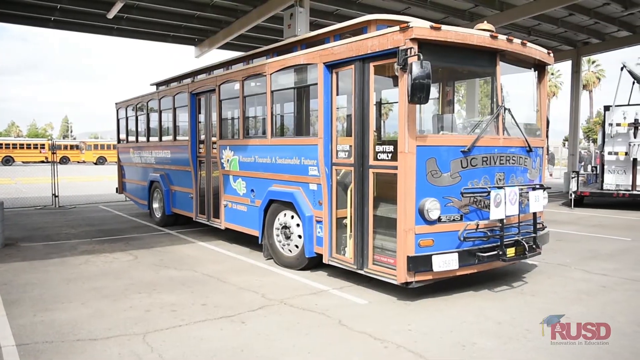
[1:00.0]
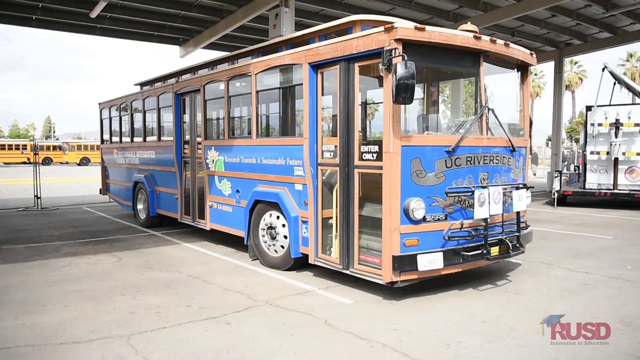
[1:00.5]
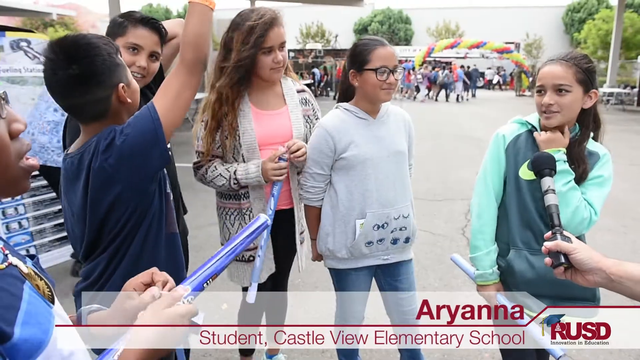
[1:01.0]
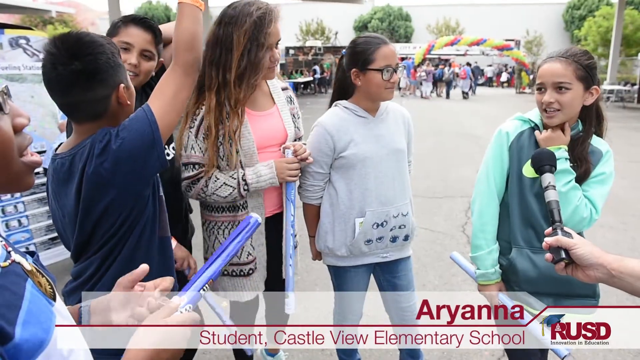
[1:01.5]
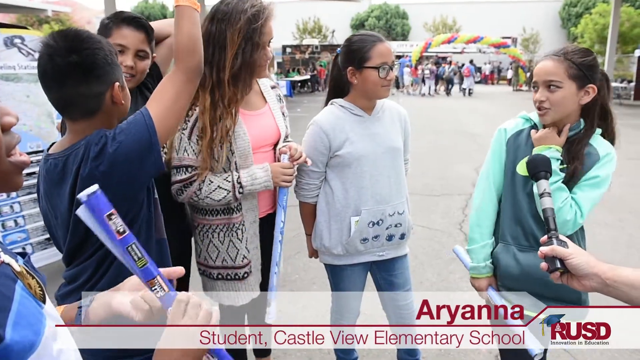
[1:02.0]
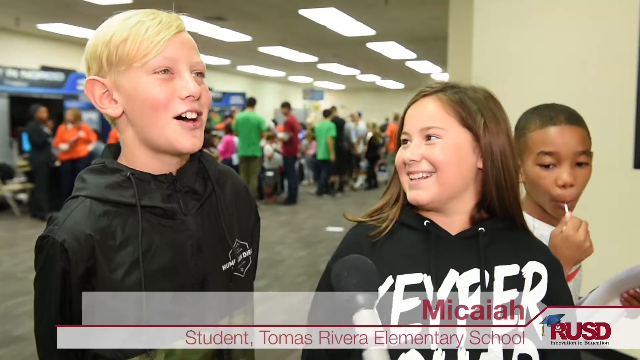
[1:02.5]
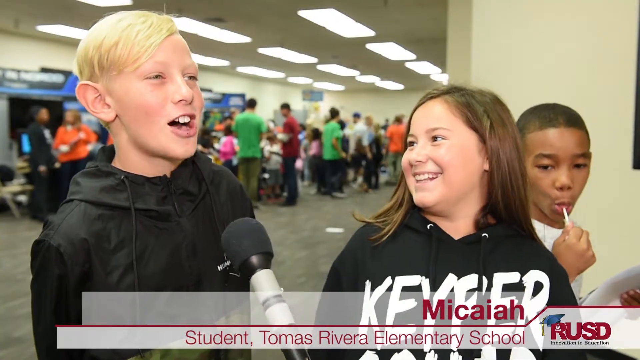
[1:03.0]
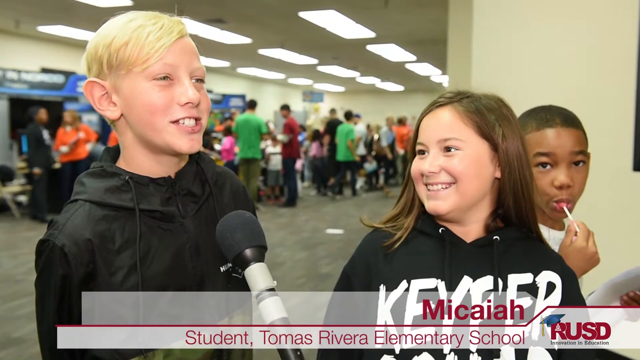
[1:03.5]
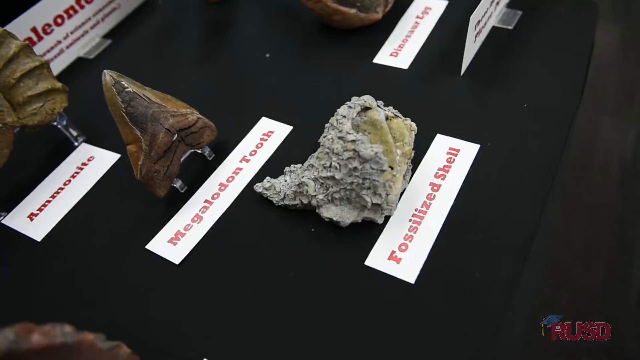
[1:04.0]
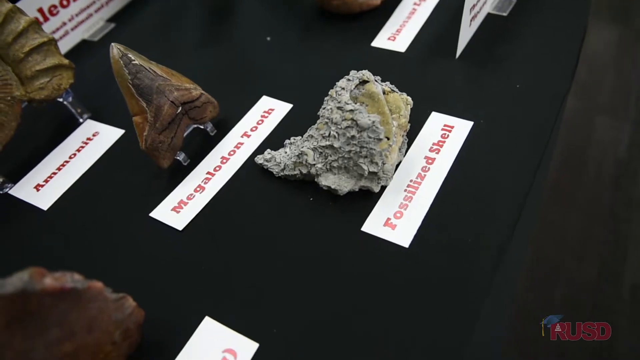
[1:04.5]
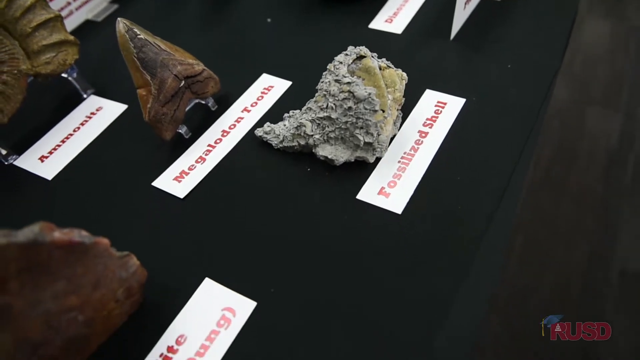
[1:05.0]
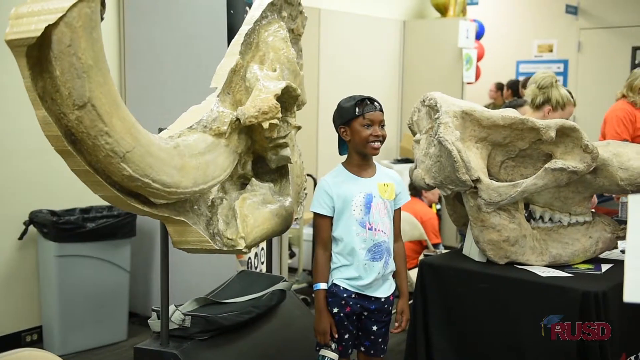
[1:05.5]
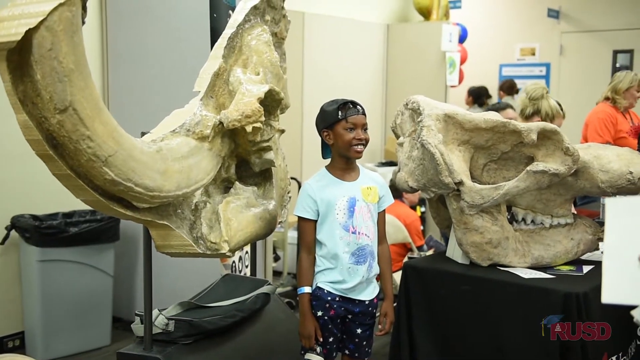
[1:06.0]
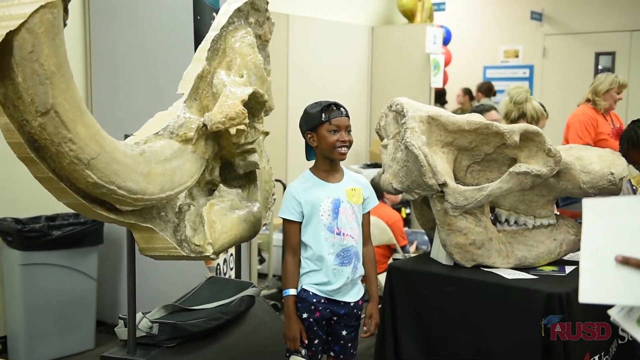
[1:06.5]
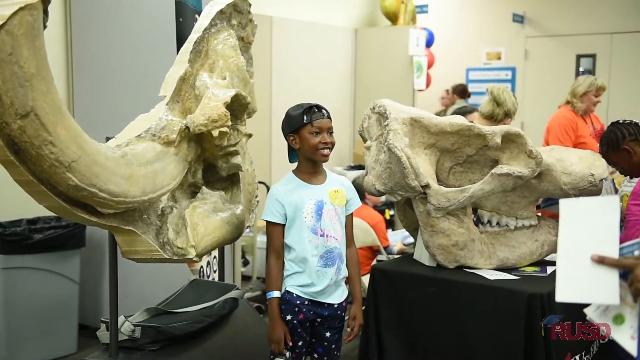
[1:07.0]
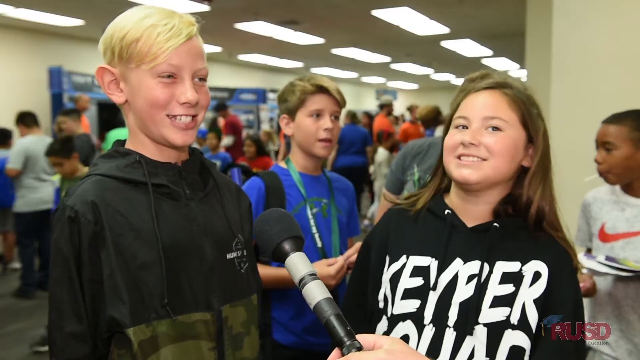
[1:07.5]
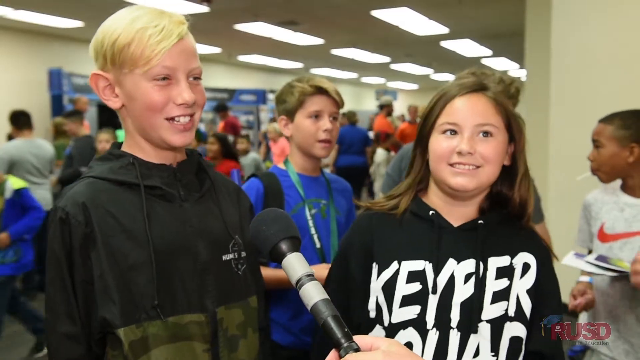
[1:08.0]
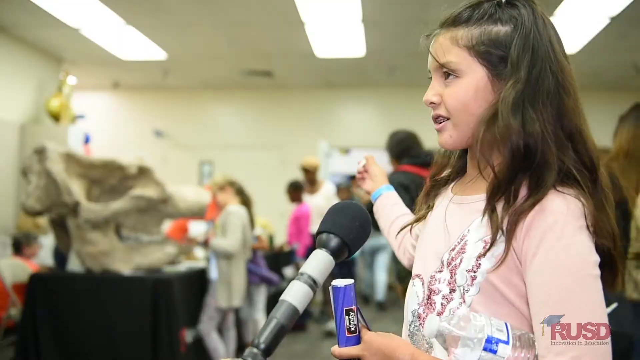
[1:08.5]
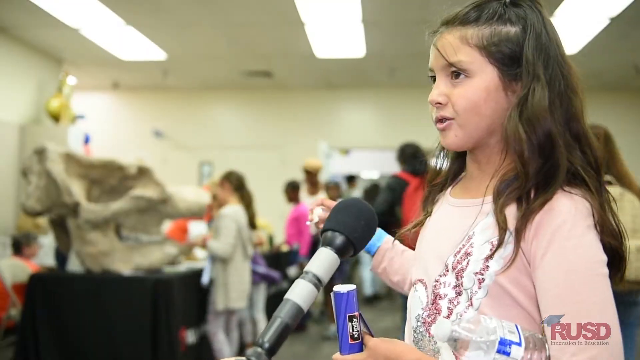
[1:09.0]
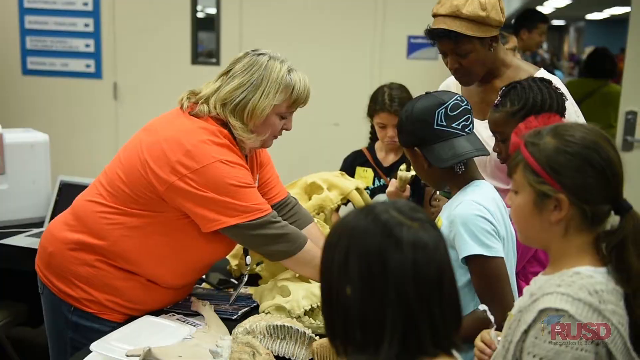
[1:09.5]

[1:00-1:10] The Riverside bus appears to be of wooden construction and is painted blue and brown. A kid apparently named Michael, whose name has an unusual spelling, is interviewed. The camera shows a booth with various fossils, including a fossilized shell, what appears to be an ammonite, and a sharp megalodon tooth, along with several other fossils on display. Mammoth skulls with tusks are also shown. Michael and his friends apparently think it is really cool to be there. A lot of people are inside the building looking at the exhibits.